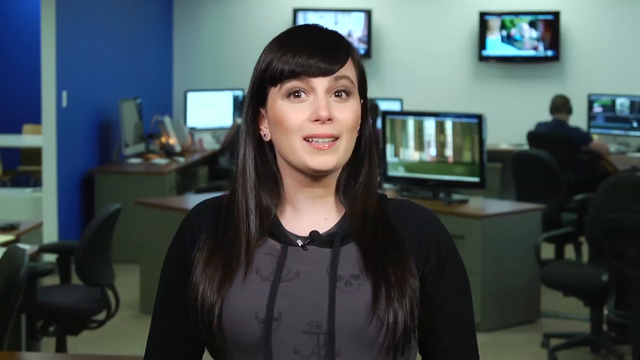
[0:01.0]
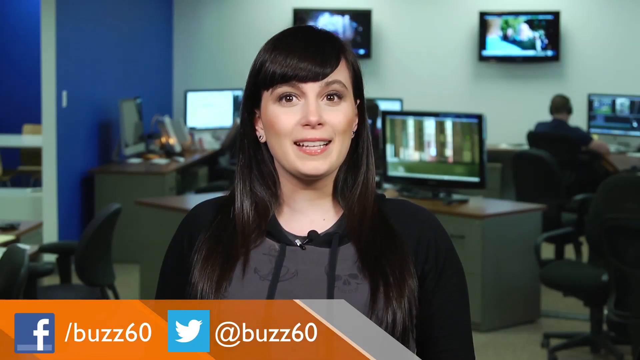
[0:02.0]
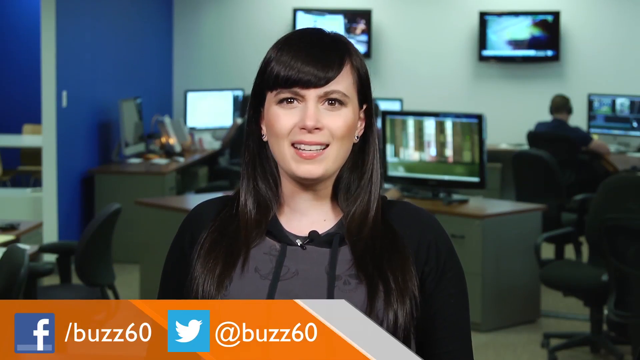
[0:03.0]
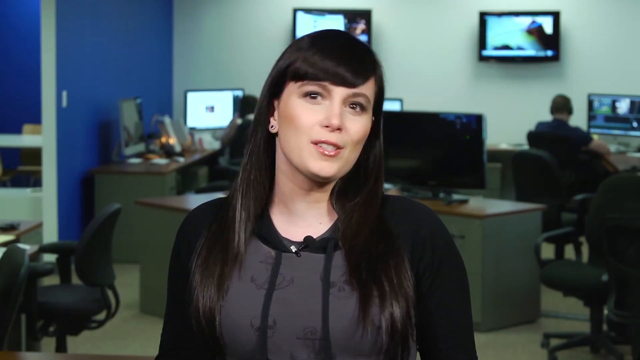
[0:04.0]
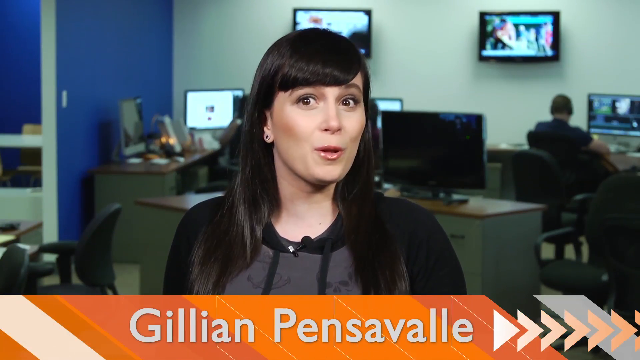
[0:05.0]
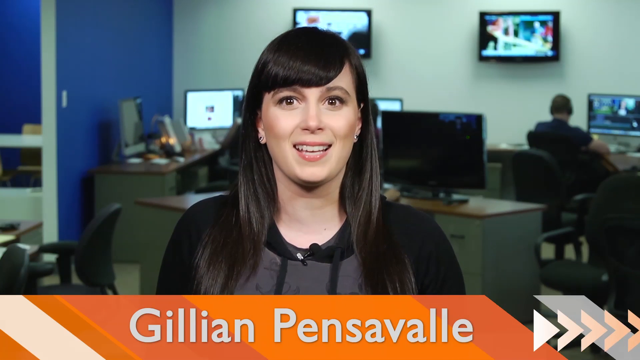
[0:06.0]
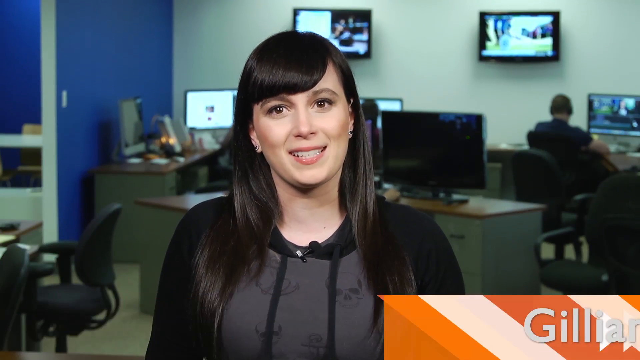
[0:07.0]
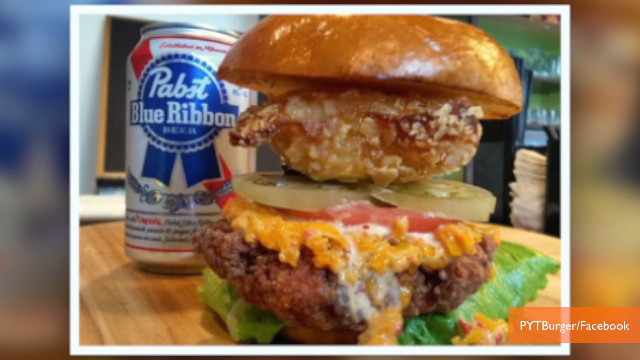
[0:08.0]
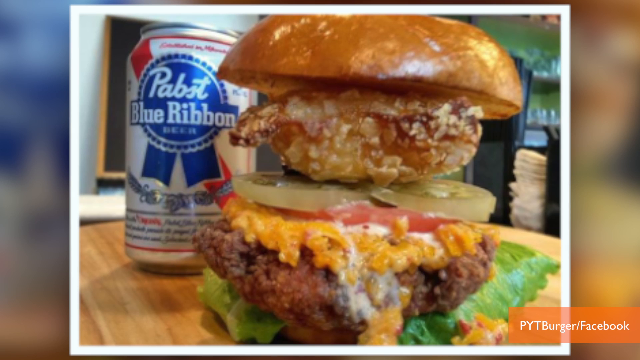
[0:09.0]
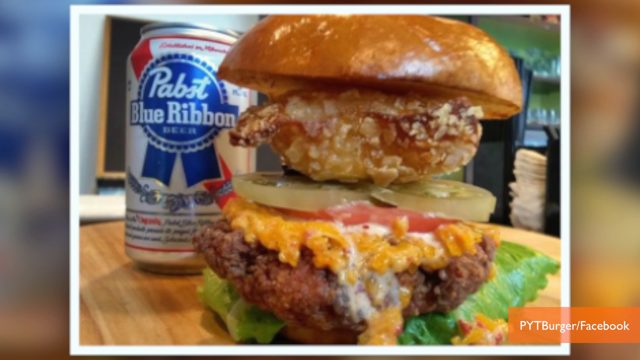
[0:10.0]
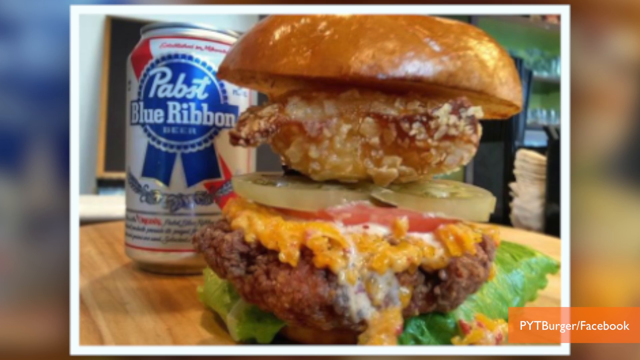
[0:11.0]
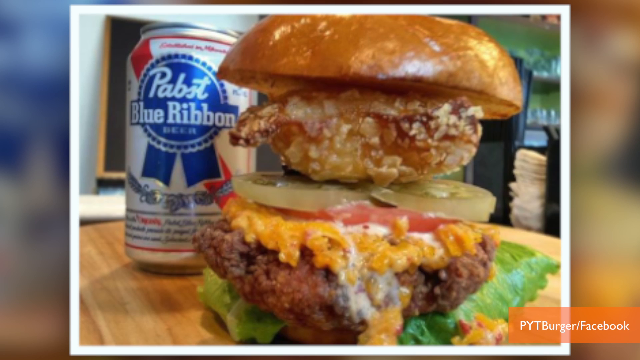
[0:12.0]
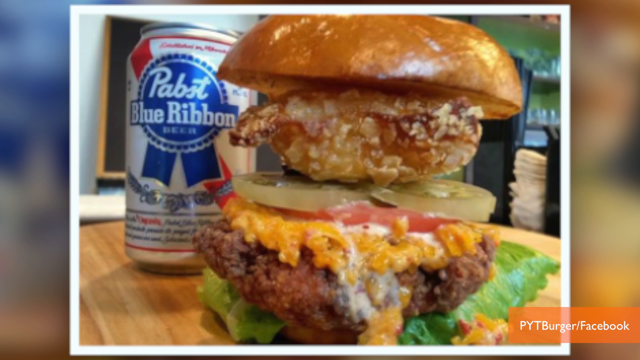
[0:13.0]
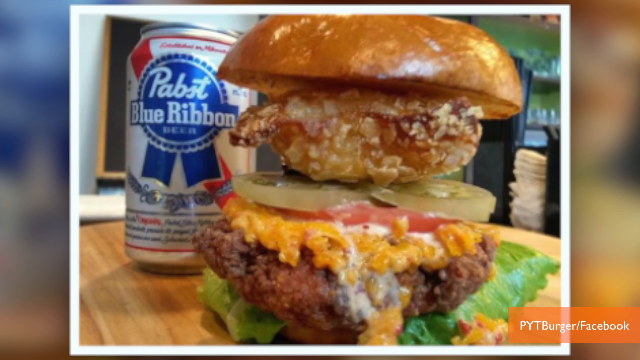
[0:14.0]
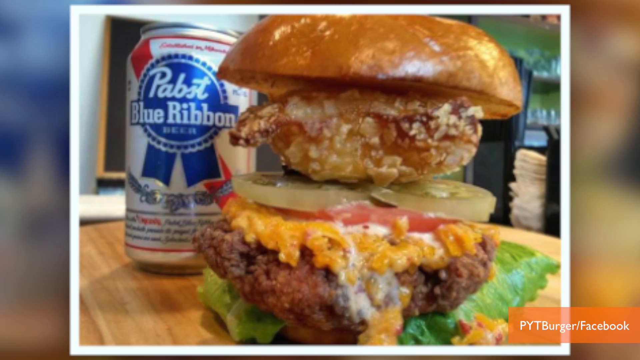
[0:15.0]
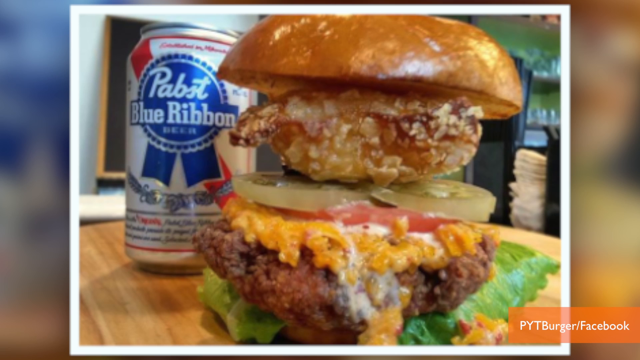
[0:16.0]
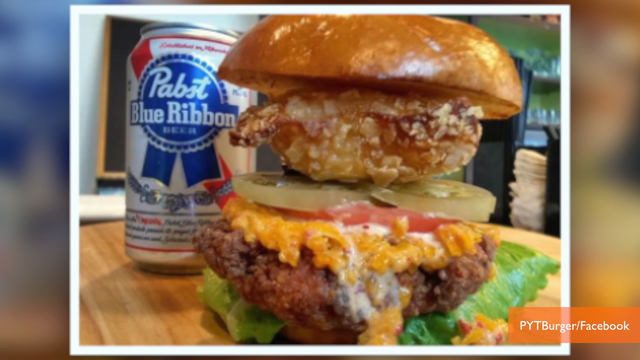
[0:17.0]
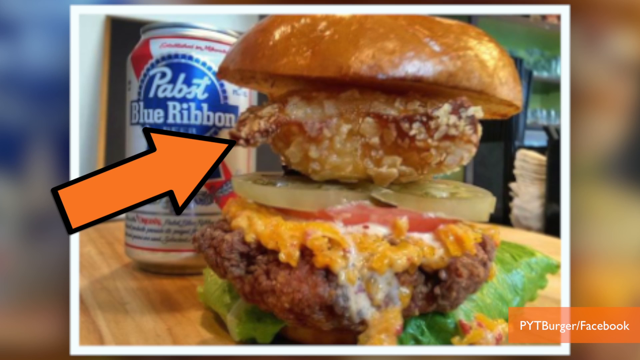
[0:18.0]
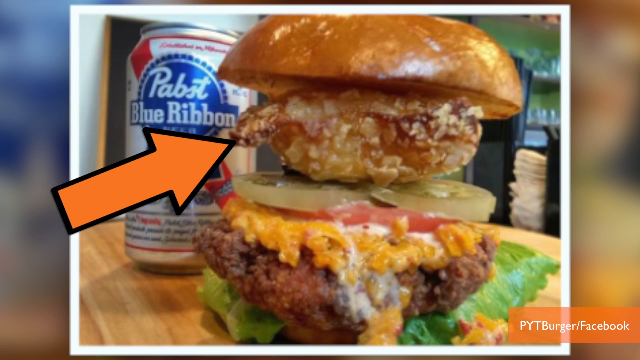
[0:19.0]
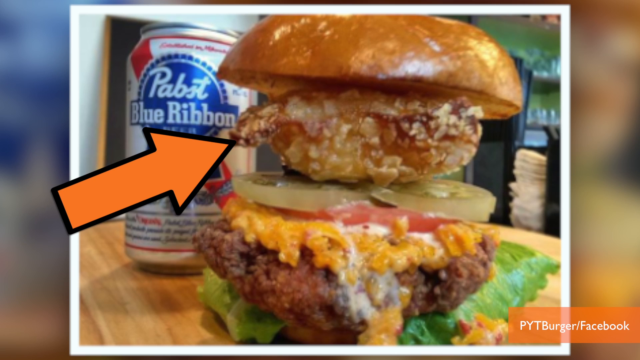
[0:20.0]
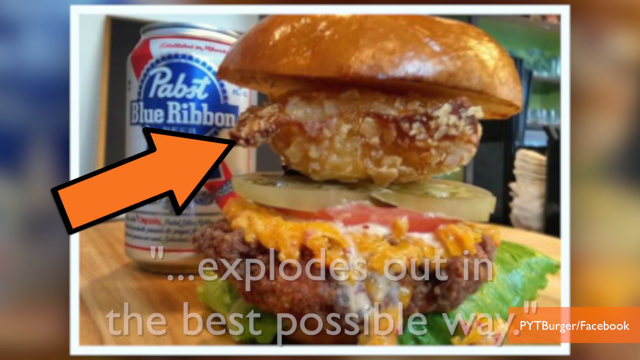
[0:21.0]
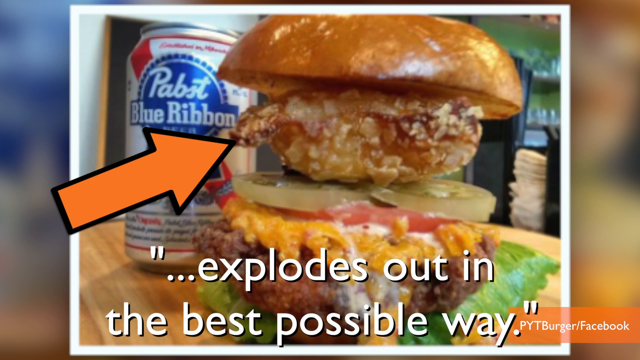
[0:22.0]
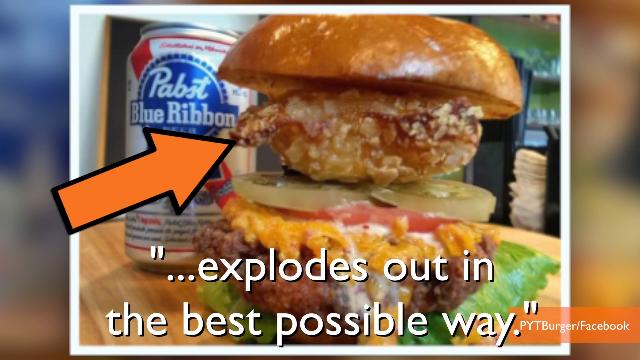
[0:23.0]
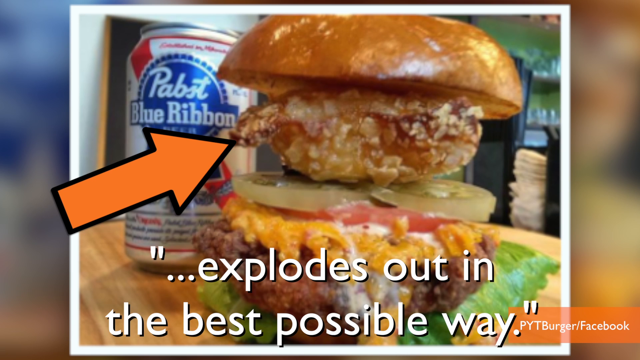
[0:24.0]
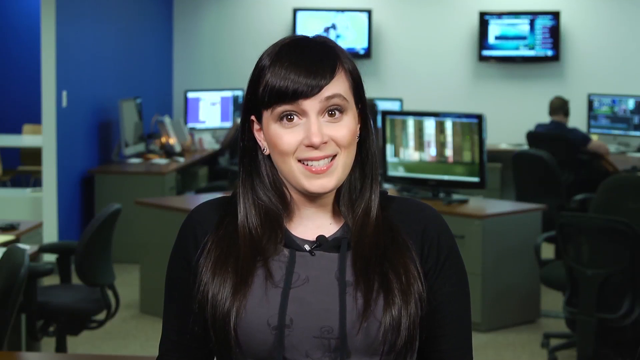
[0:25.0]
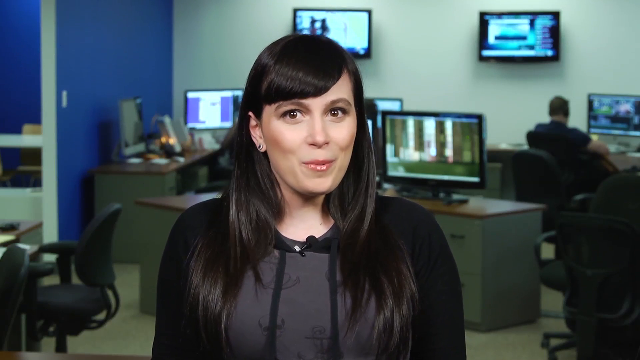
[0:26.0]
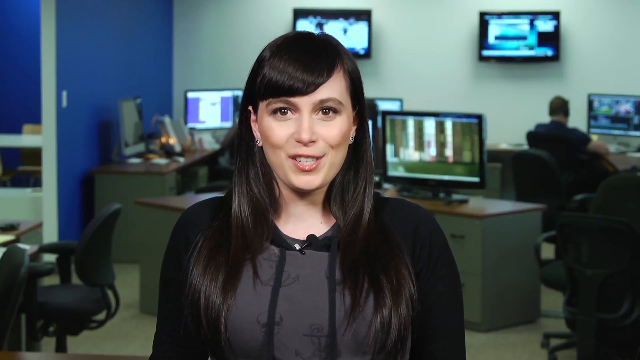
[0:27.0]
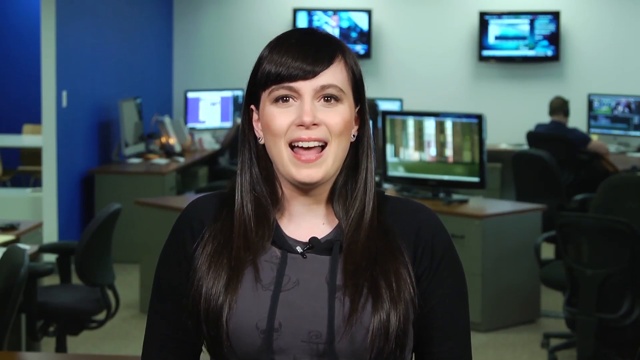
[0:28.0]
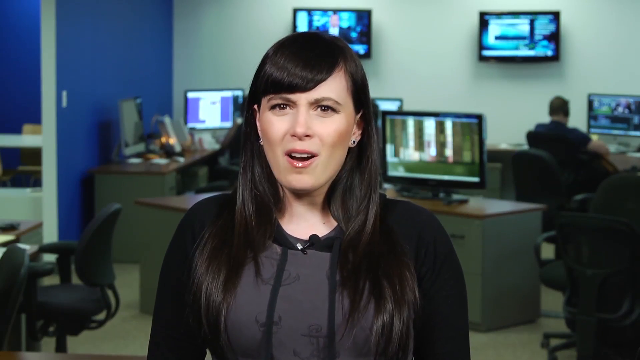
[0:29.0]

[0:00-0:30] The video opens with Buzz 60, showing arrows moving to the right across an orange screen. A woman named Jillian appears in an office setting. Next, a huge, very tall hamburger is shown next to a Pabst Blue Ribbon beer, with an arrow pointing to the top of it and the text "explodes out in the best possible way." The burger is many inches tall and very juicy looking. The woman is on screen again, speaking. Behind her a man works on a computer, there are computer monitors on the wall and throughout the office, and the office has many seats behind her where people can work. As she moves, another person can be seen working in the left corner of the room.